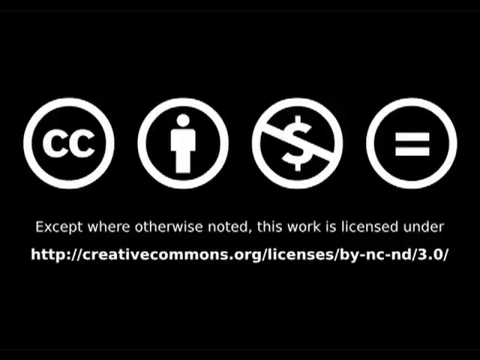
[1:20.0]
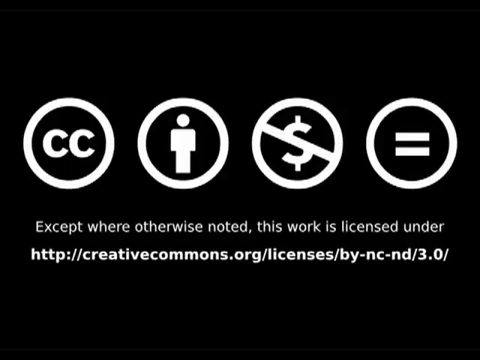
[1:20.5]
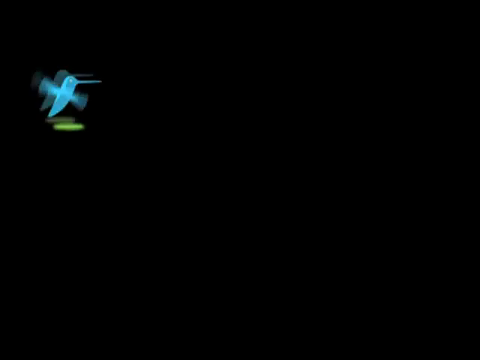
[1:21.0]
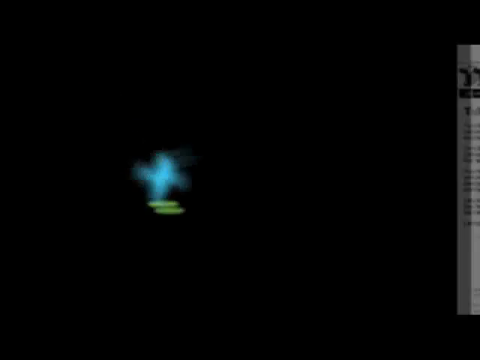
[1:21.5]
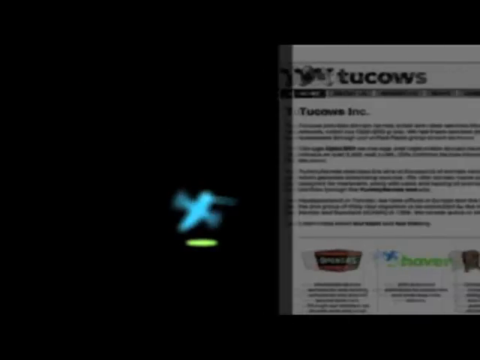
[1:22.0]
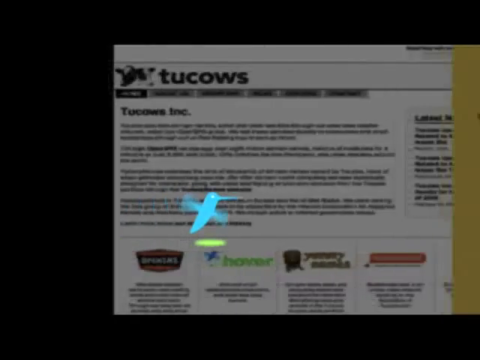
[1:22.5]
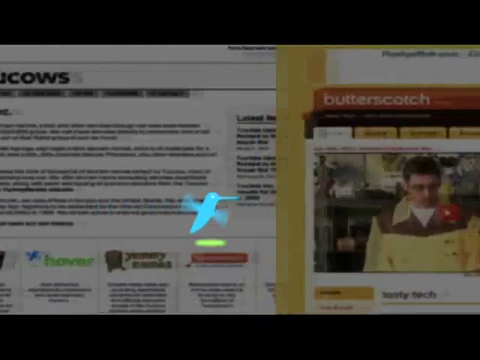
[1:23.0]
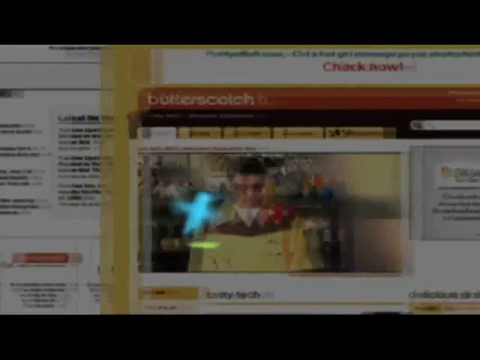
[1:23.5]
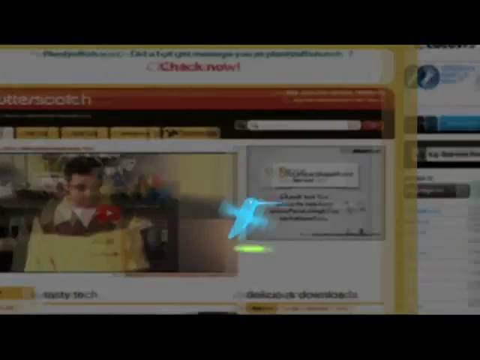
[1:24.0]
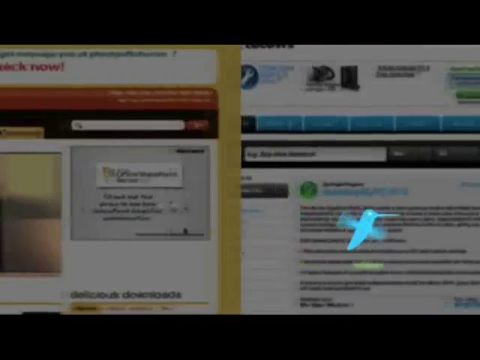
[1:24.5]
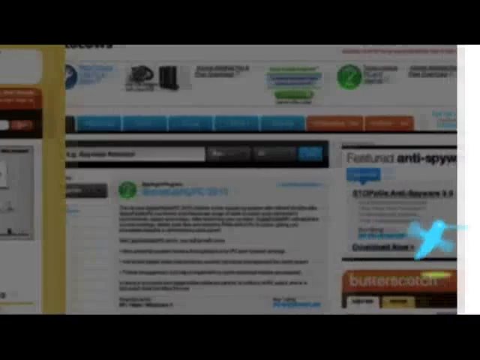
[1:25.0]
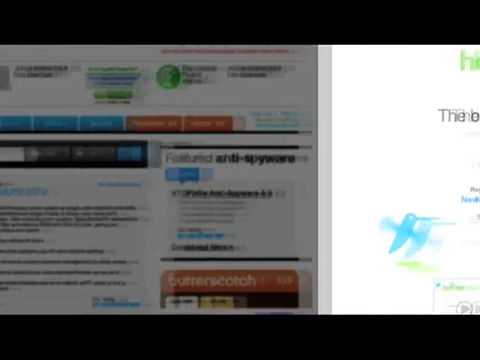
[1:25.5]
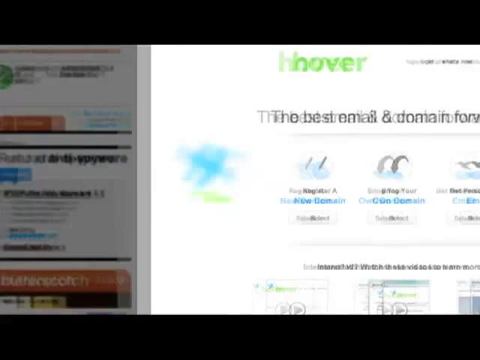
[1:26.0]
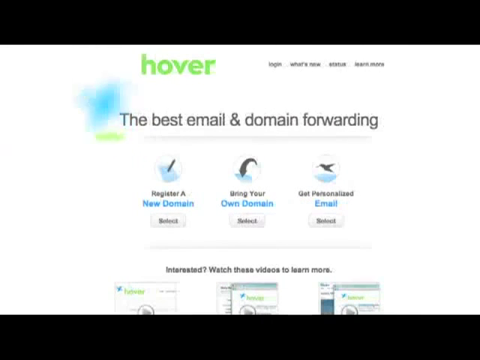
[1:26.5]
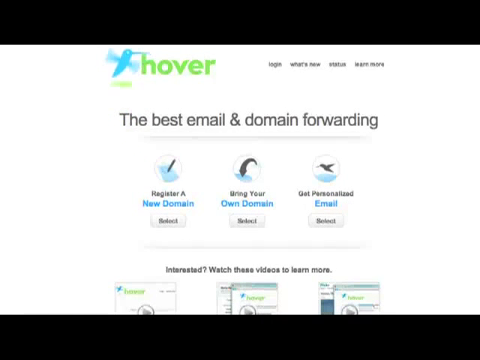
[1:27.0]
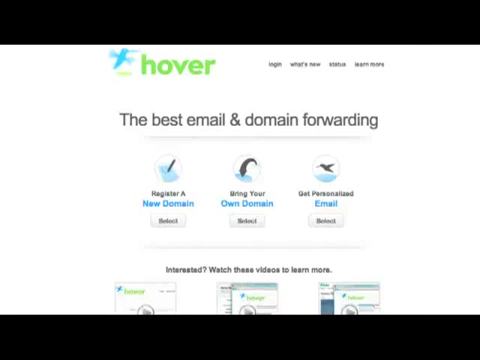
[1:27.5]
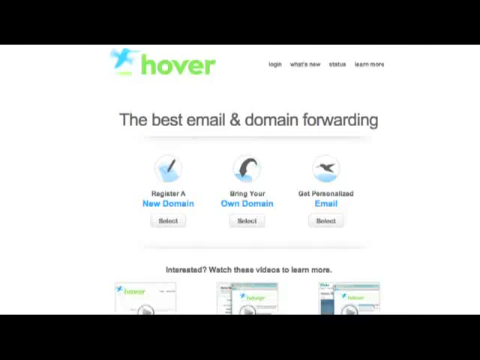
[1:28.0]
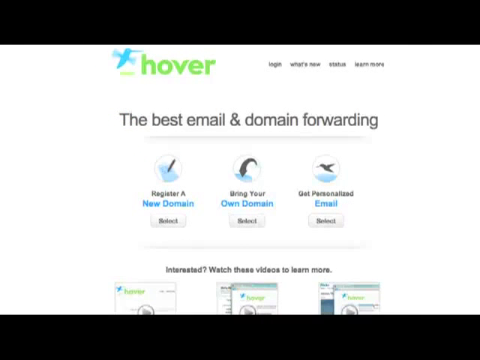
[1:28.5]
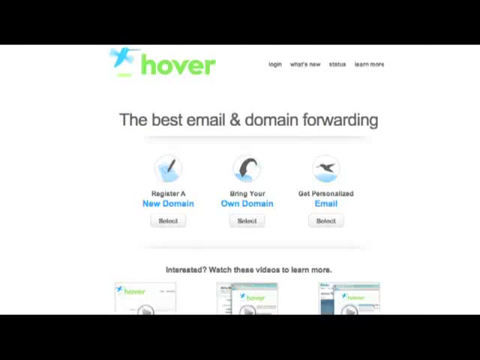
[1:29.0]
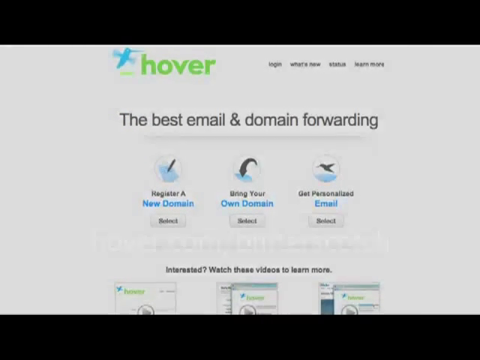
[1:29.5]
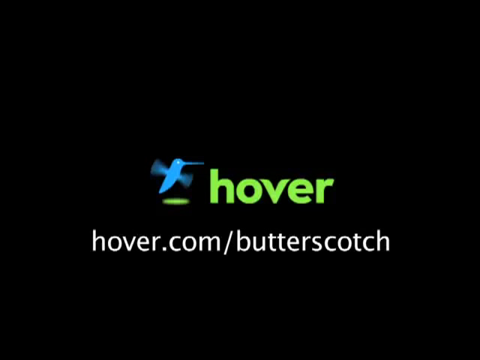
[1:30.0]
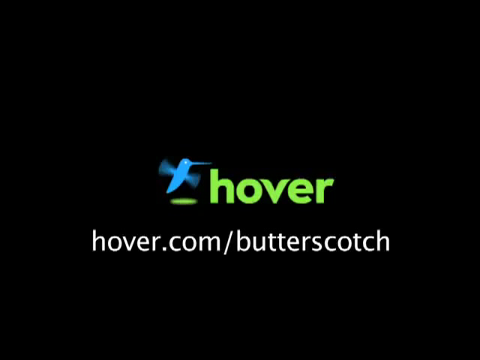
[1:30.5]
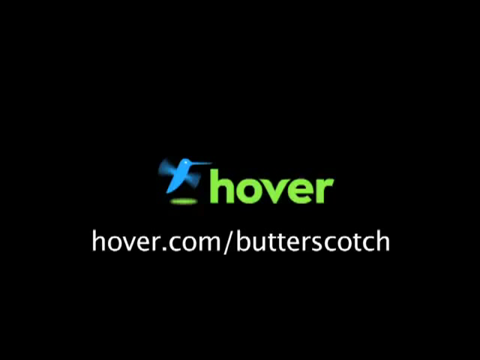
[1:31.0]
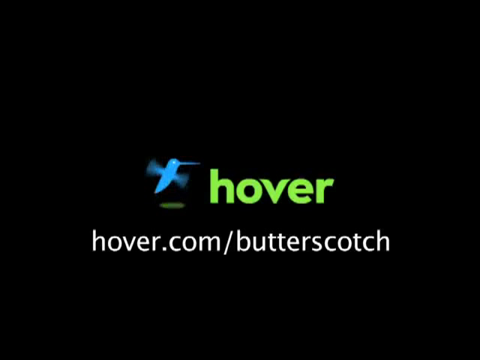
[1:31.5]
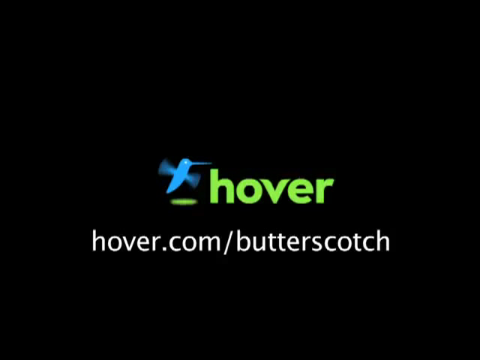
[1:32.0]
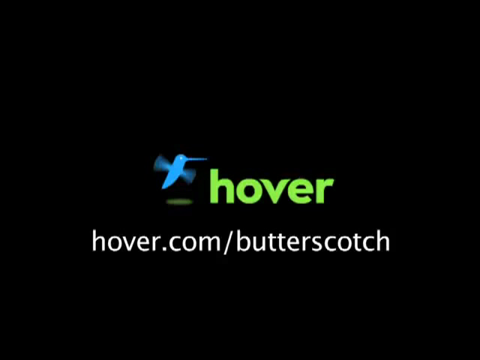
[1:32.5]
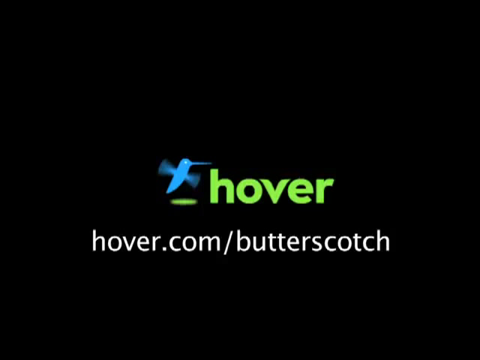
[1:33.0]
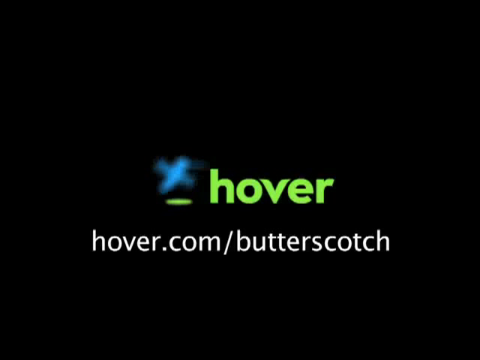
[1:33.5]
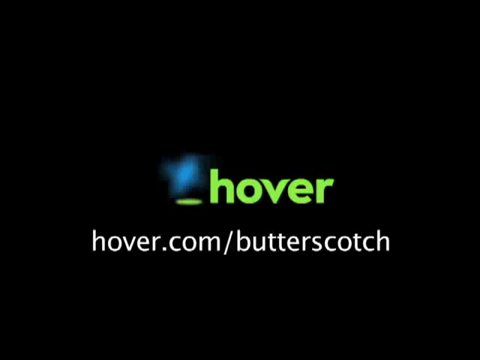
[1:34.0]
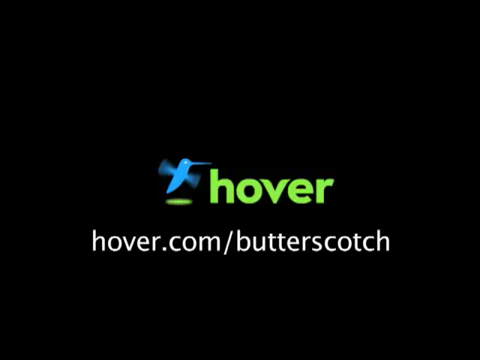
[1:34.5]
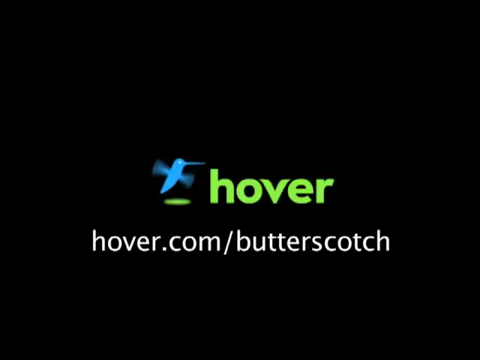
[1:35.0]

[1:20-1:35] On a black background, white text saying "CC" is inside a white circle at the far left. To its right is a white person logo in a white circle, then a no-dollar-sign logo in a white circle, and at the far right a white equal sign logo in a white circle. Underneath these four symbols, white text reads "Except where otherwise noted, this work is licensed under" and on the next line "http://creativecommons.org/licenses/by-nc-nd-3.0/". The text disappears, and a light blue hummingbird logo with rapidly flapping wings and a green shadow appears from the top left and flies toward the bottom right. Behind the bird, a faded row of Tucow and butterscotch websites comes from the right of the screen, moving leftward. Then a website with a homepage titled "Hover" in green text stops in the background, and the blue hummingbird flies to the left of the green Hover logo. Underneath the Hover logo is text reading "The best email & domain forwarding" with three icons; under the icons is more text, and under that are buttons that say "Select."